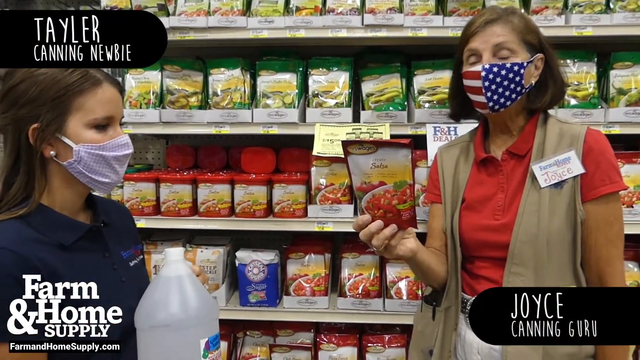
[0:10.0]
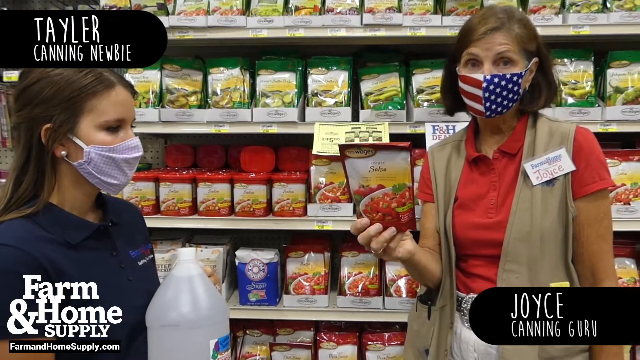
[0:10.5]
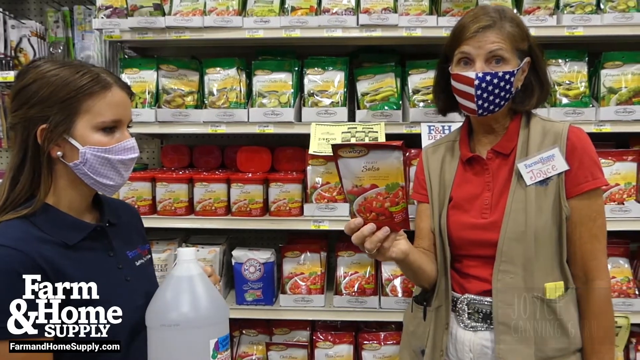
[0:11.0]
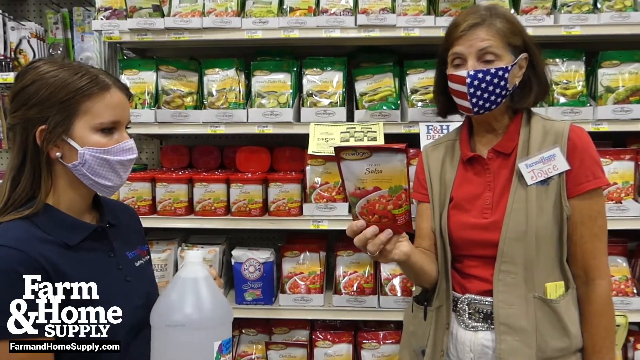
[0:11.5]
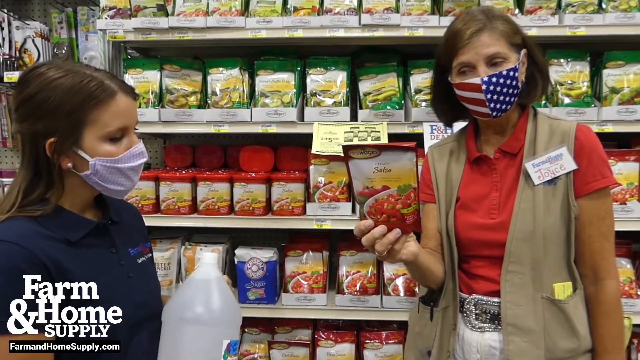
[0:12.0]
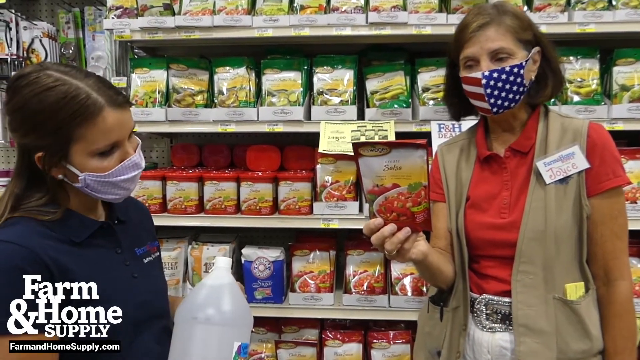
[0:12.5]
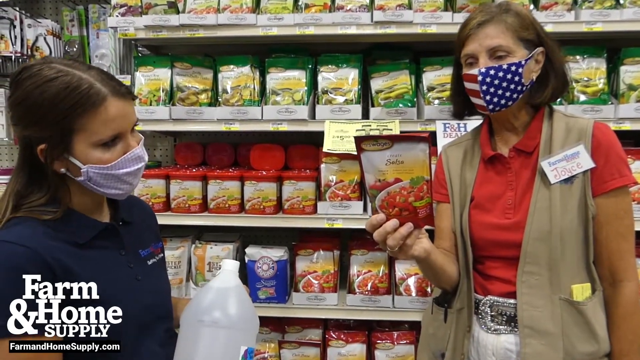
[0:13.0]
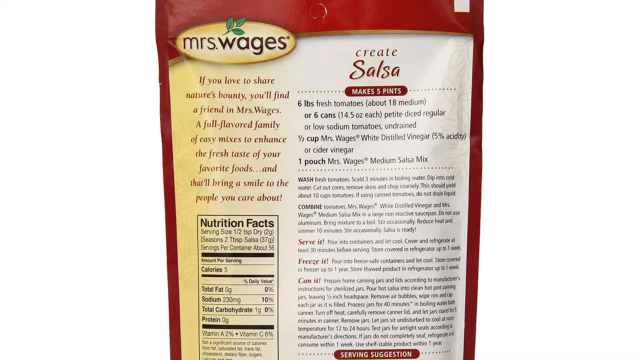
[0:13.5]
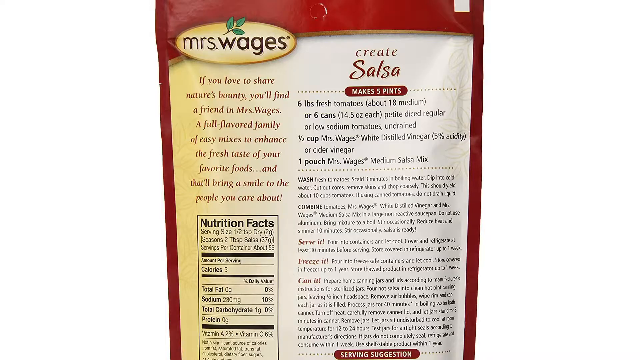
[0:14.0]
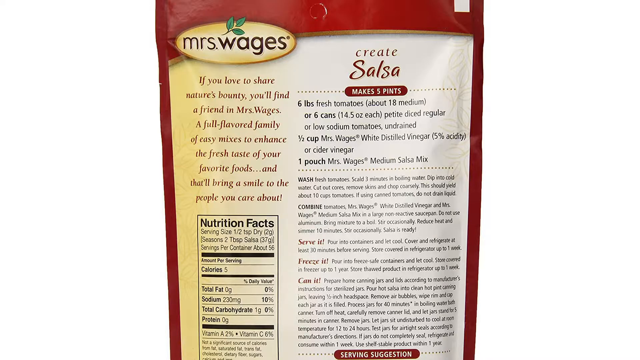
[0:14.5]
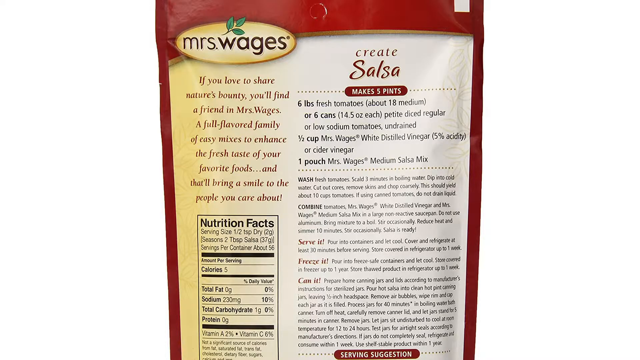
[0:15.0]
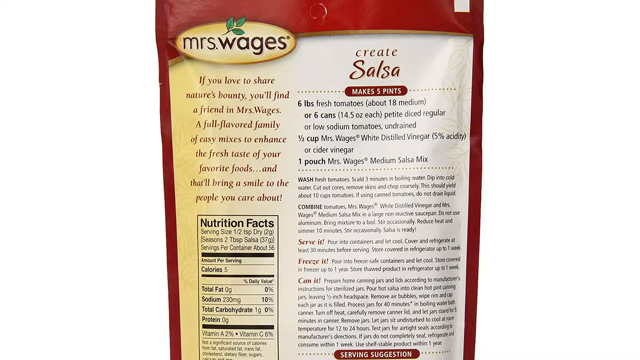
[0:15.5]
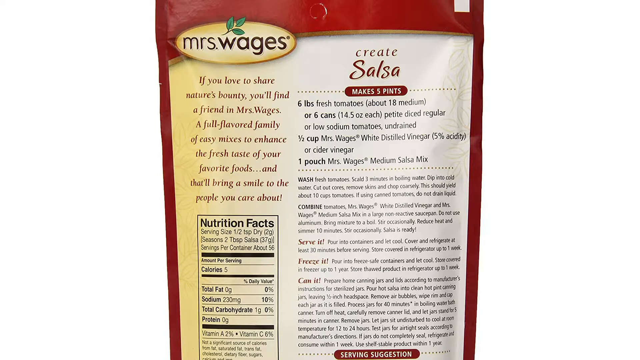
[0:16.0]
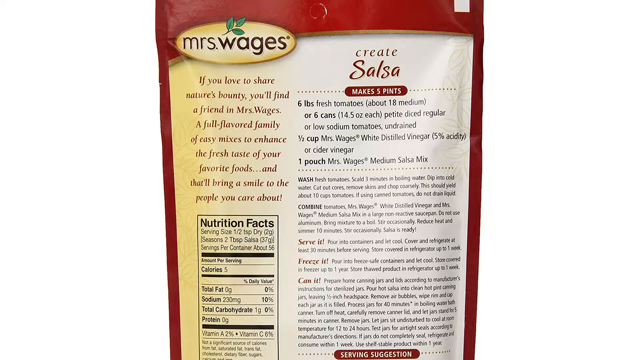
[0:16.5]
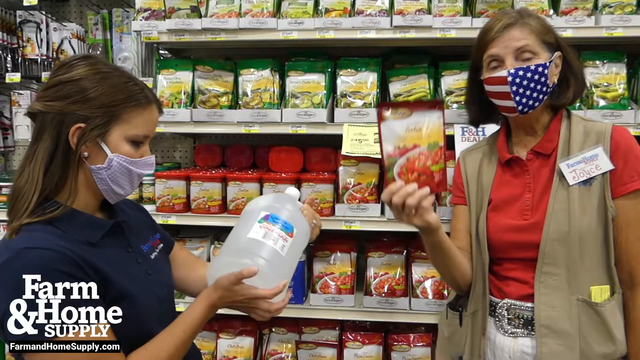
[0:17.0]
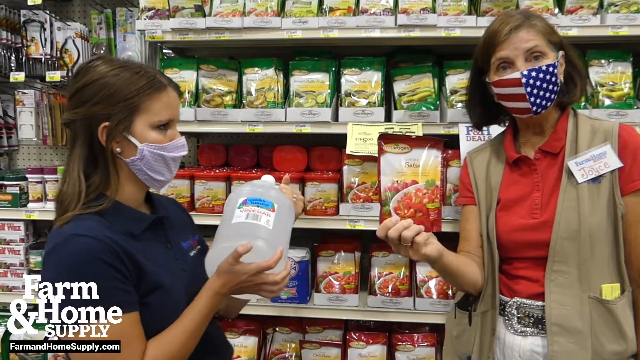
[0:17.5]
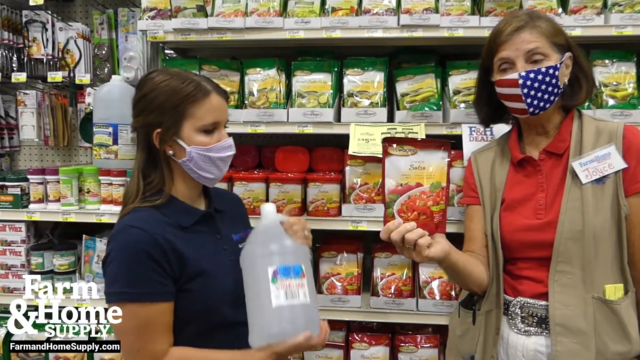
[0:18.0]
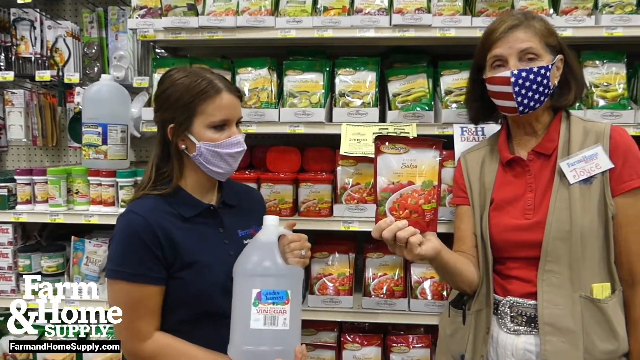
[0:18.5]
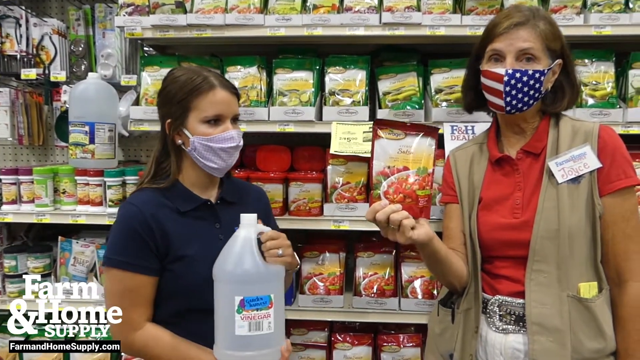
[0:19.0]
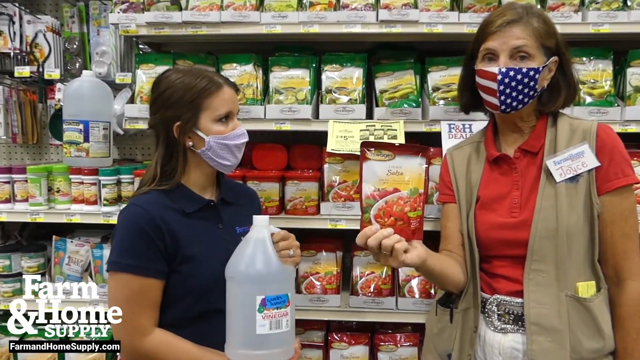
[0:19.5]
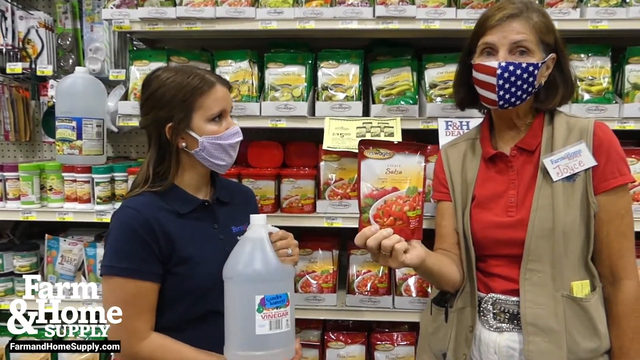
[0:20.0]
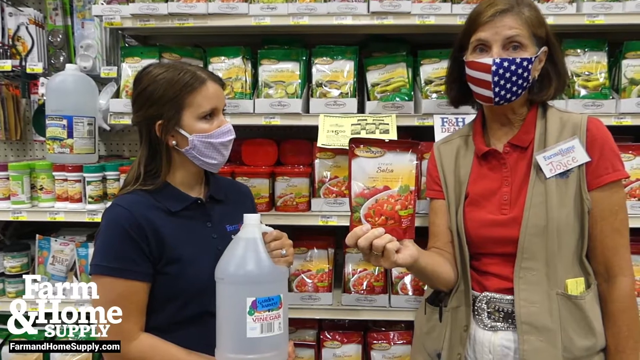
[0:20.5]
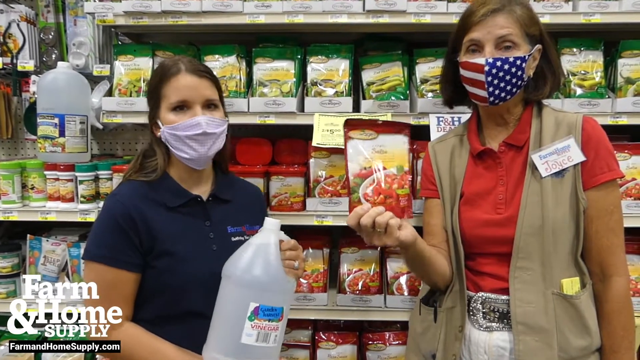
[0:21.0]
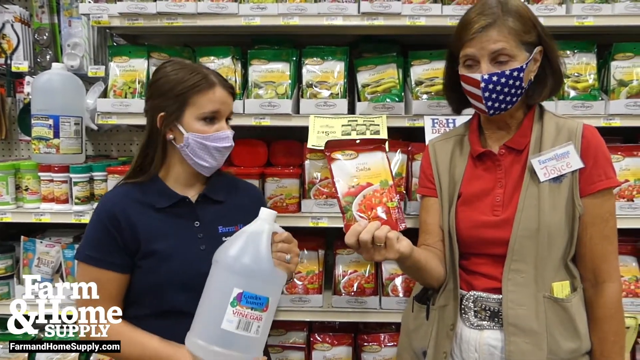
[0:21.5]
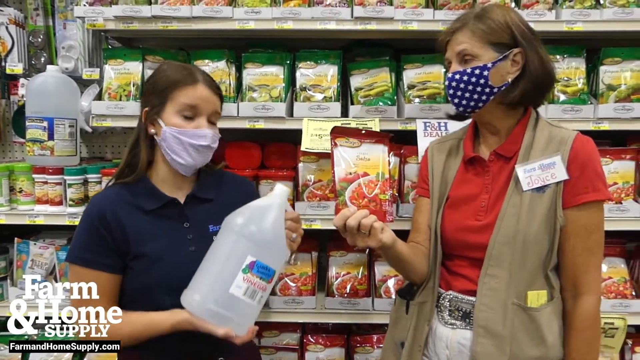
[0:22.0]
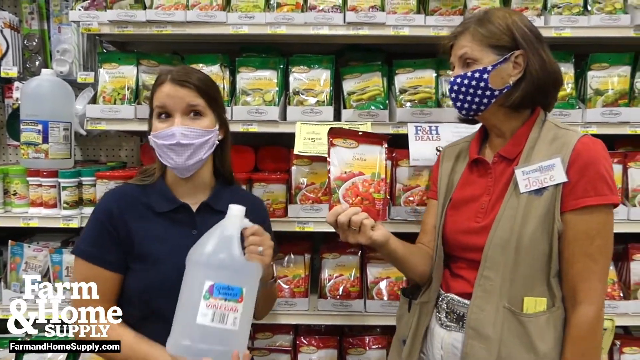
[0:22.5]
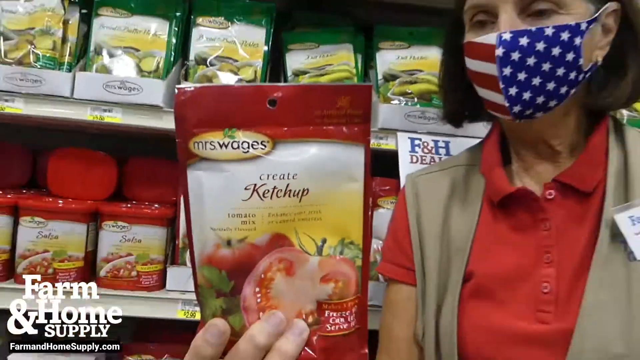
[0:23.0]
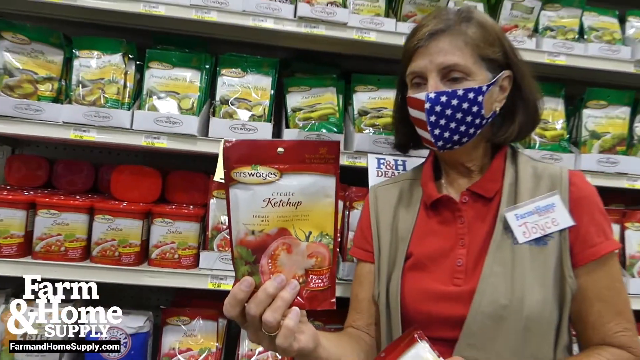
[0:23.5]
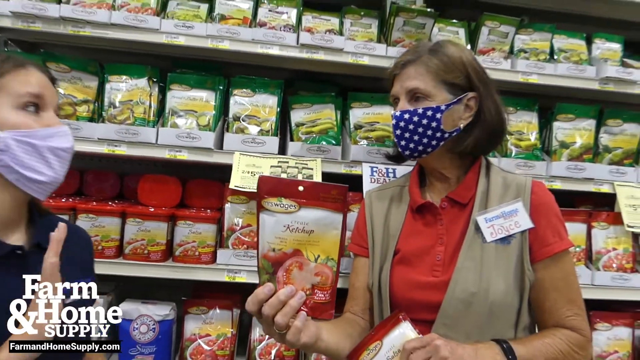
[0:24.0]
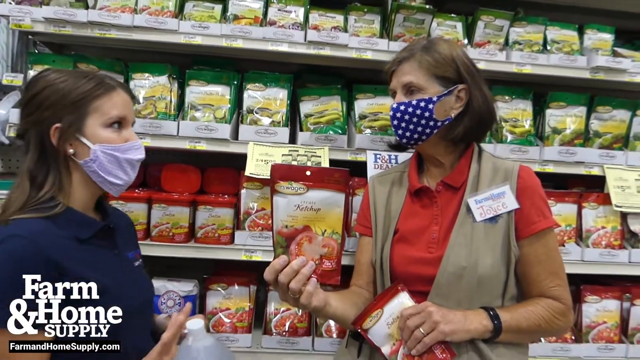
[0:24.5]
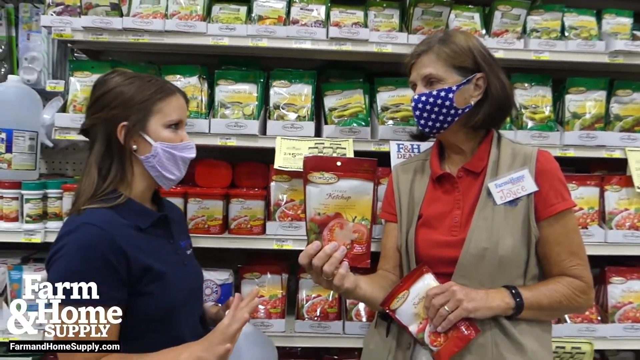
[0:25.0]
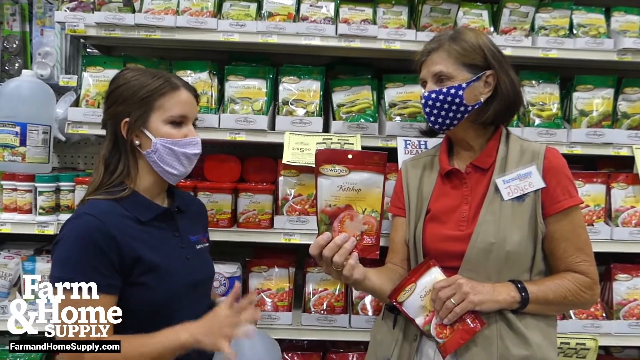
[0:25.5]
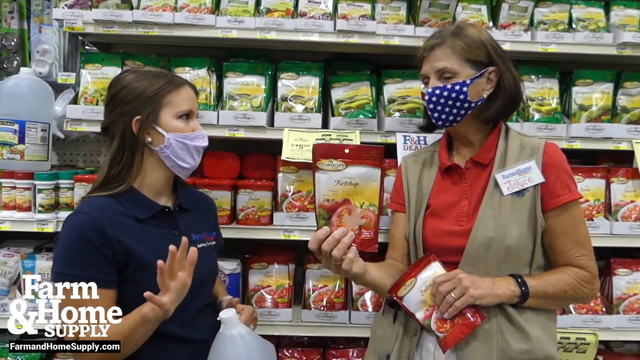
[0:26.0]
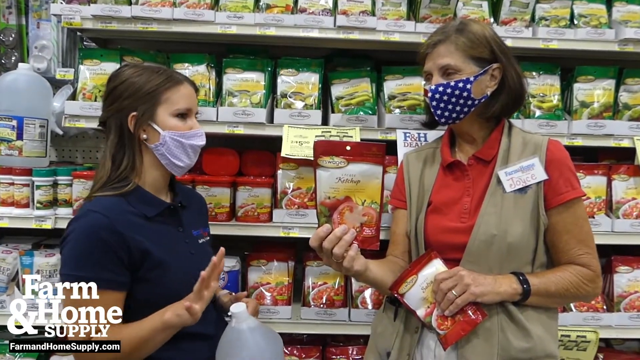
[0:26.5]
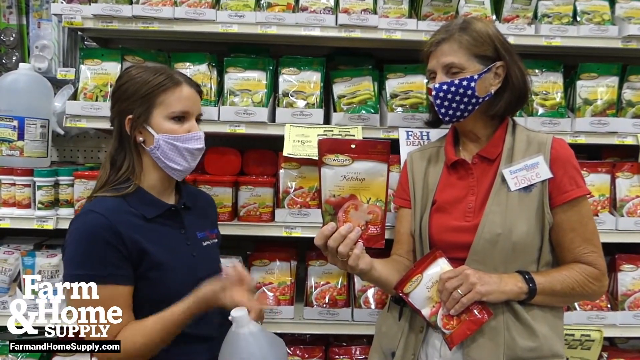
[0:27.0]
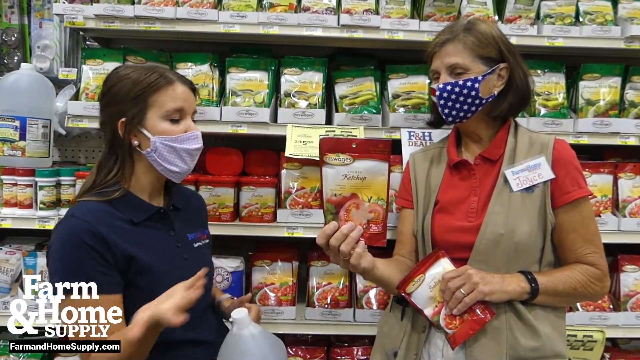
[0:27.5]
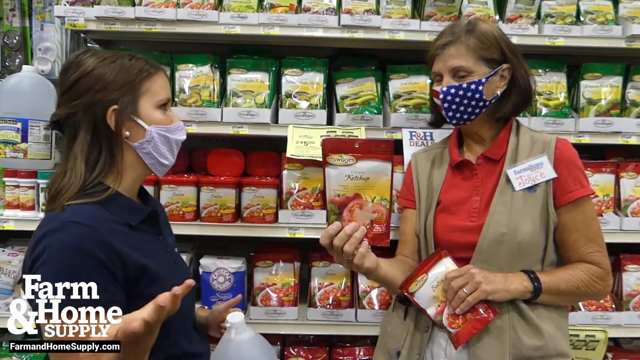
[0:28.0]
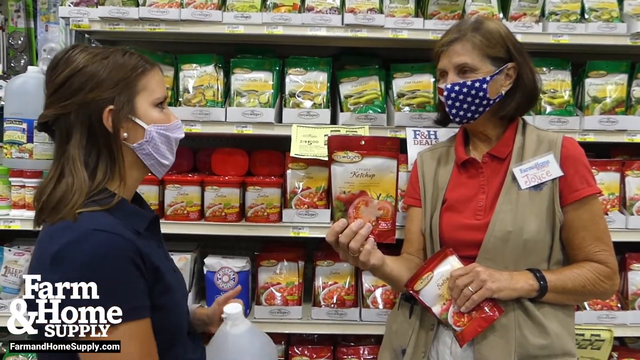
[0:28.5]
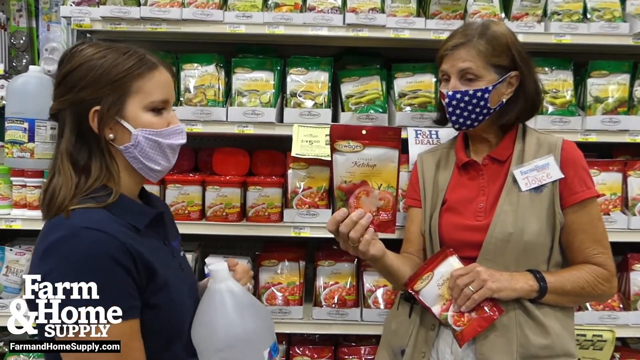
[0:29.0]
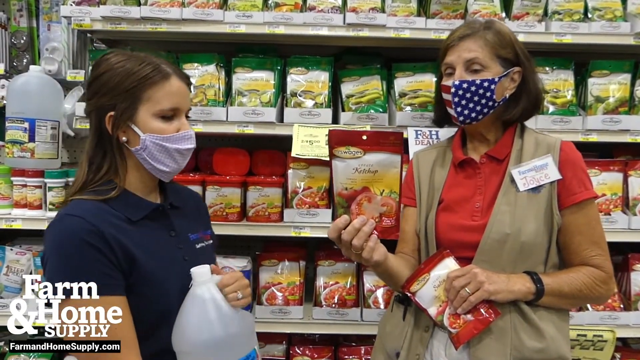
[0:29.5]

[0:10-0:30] Joyce, labelled a canning guru, and a younger woman named Tayler, labelled a canning newbie, stand in a grocery store. Joyce holds a package with "salsa" on the front while Tayler holds a container of white liquid. A close-up shows the package, called Mrs. Wages, with "Create Salsa" on the right along with directions for making salsa. The shot cuts back to the two women, and the woman with the salsa mix speaks toward the camera while moving the package up and down a couple of times, as if to emphasize her point. The woman to the side seems to comment on something, looks toward the camera, and then looks back at the mix in a surprised way. A cut shows the older woman now holding a ketchup package. The younger woman speaks to her and gestures with her hand as if to say no. The older woman begins to speak while looking at the camera, as if answering the question.